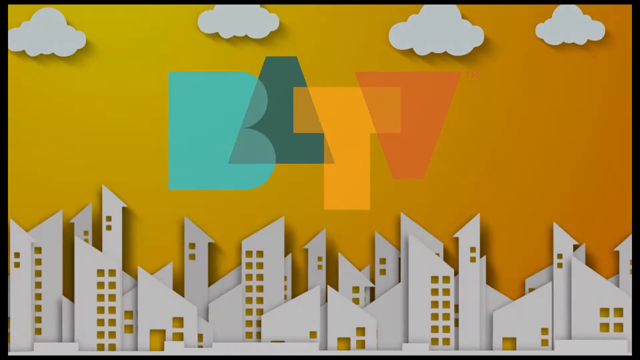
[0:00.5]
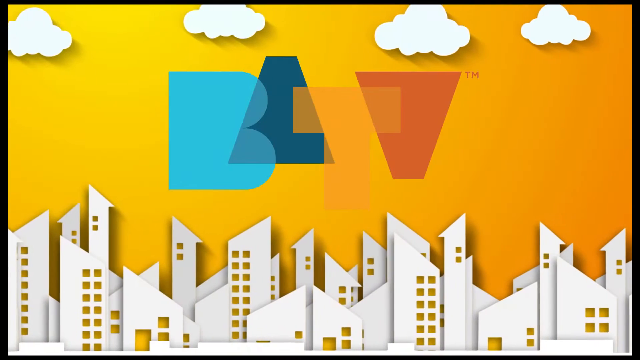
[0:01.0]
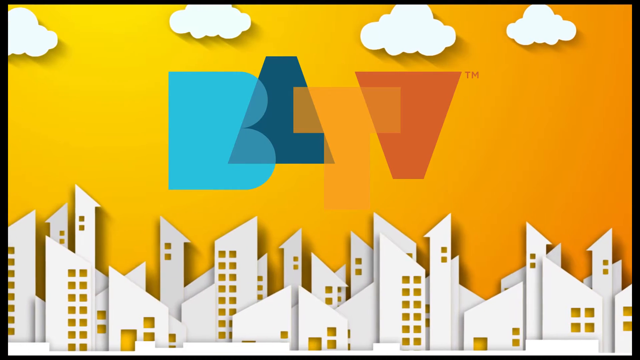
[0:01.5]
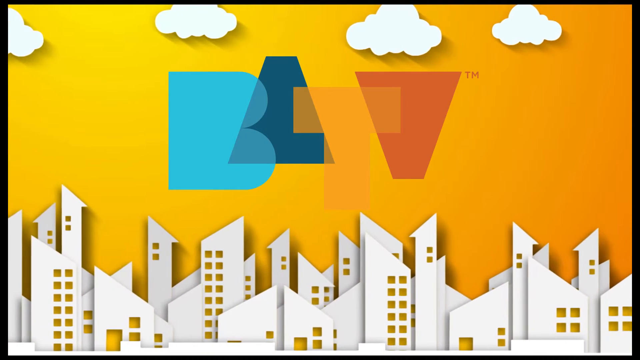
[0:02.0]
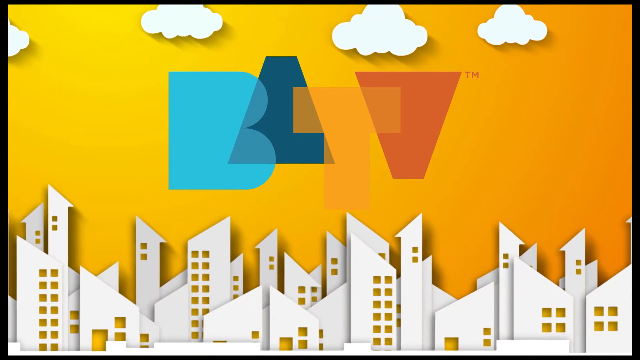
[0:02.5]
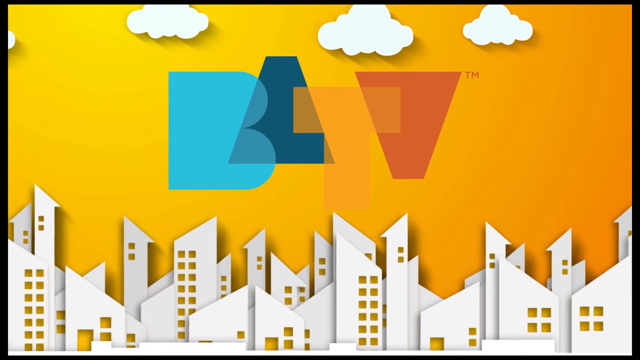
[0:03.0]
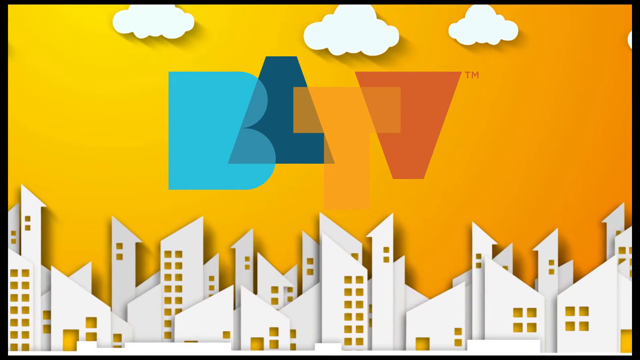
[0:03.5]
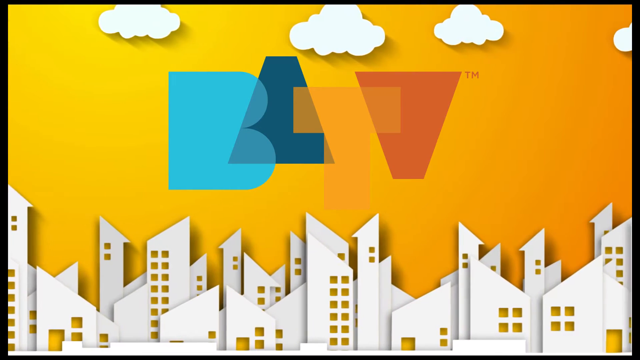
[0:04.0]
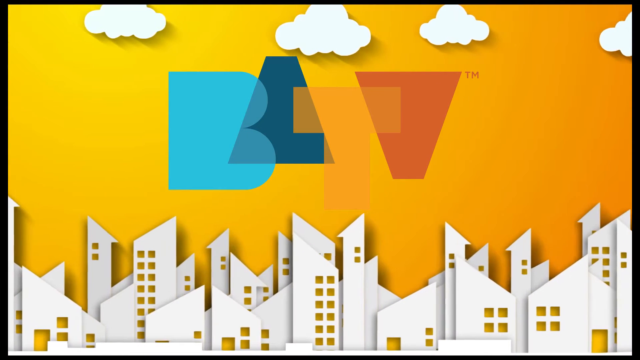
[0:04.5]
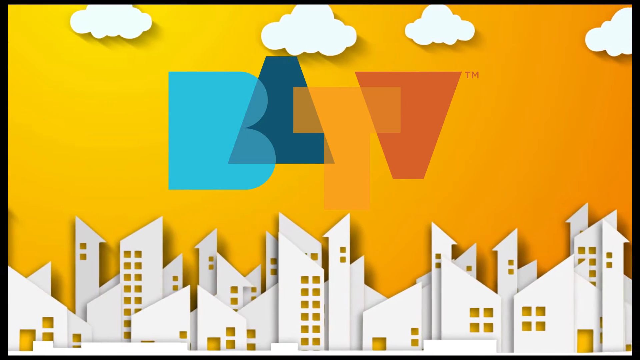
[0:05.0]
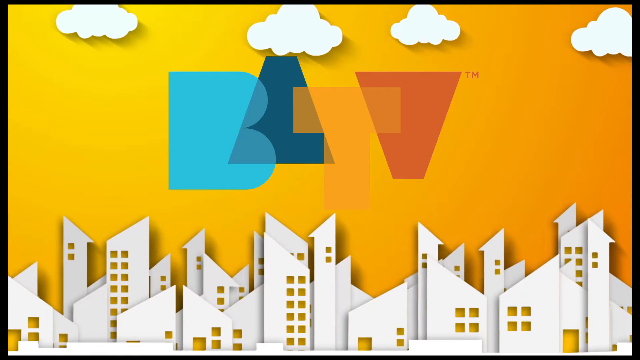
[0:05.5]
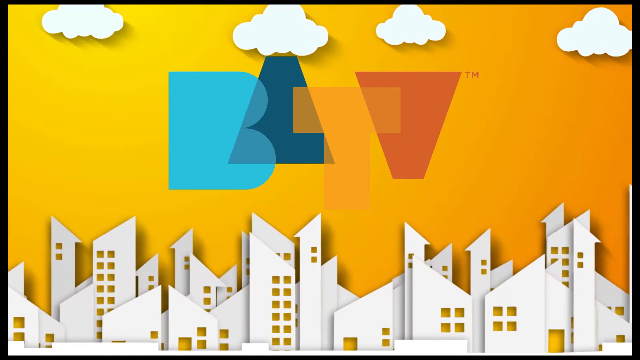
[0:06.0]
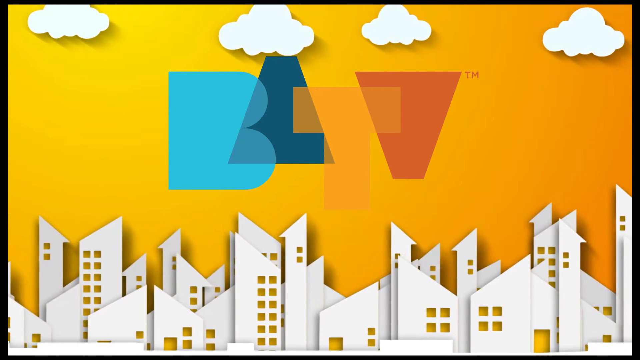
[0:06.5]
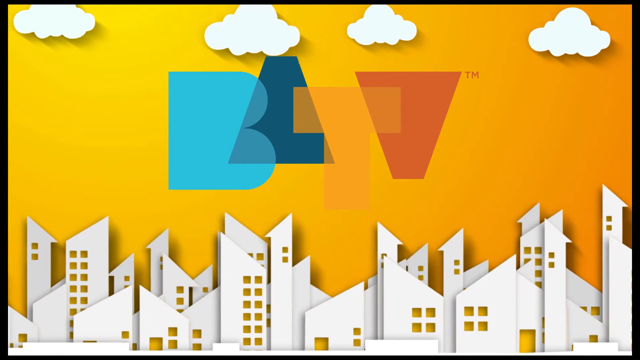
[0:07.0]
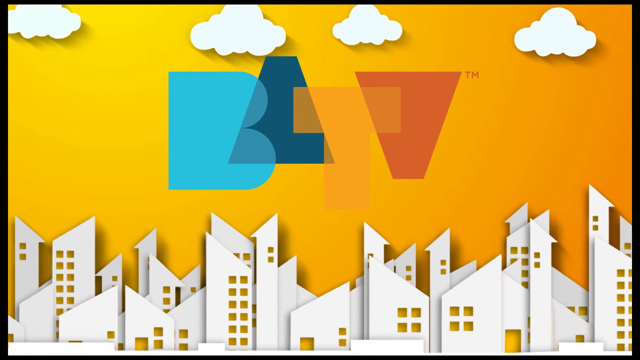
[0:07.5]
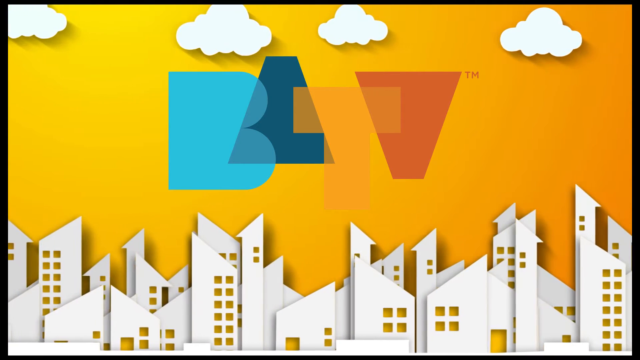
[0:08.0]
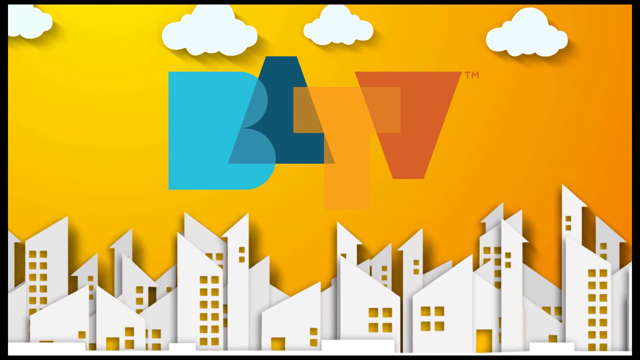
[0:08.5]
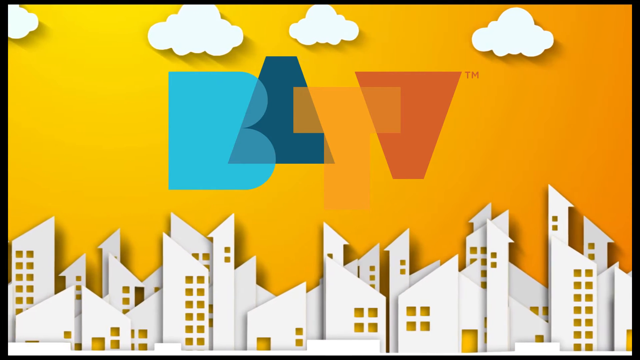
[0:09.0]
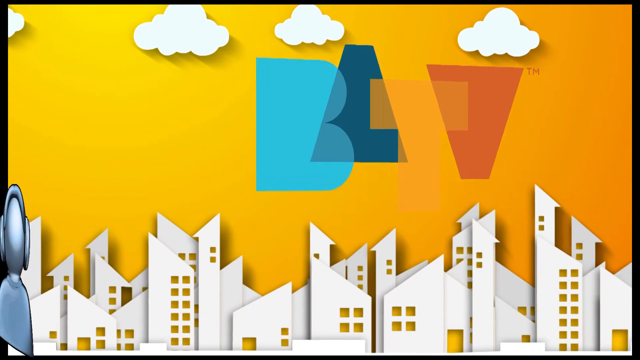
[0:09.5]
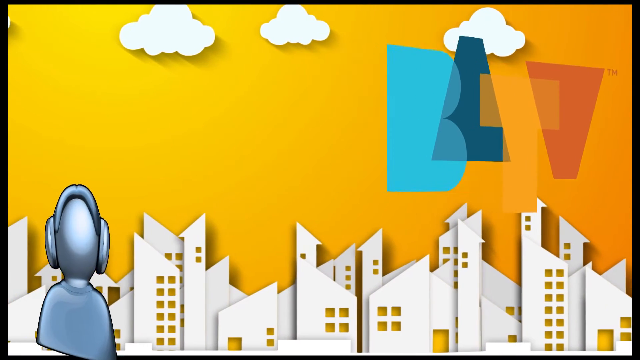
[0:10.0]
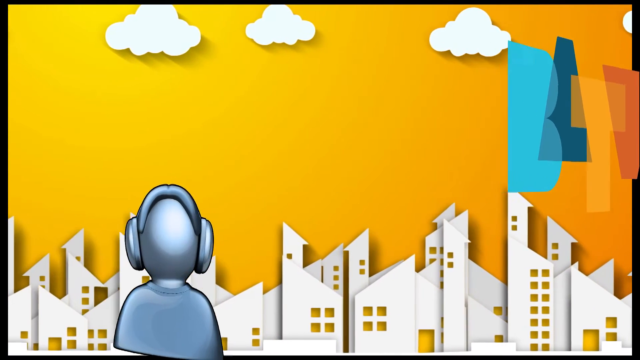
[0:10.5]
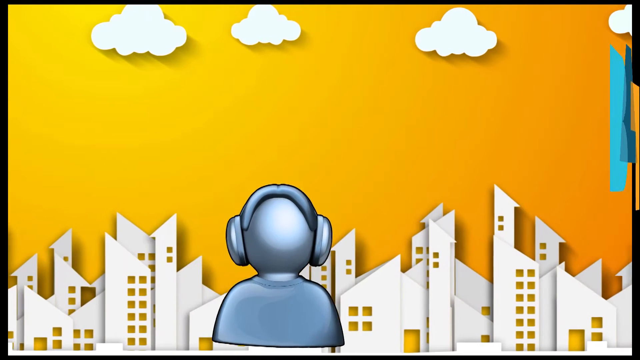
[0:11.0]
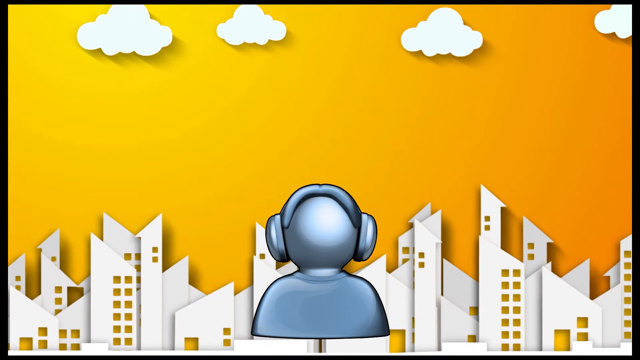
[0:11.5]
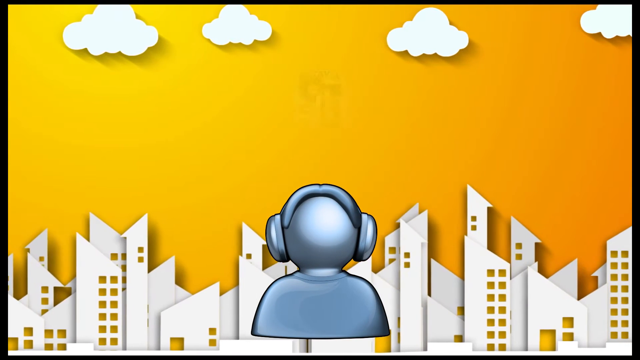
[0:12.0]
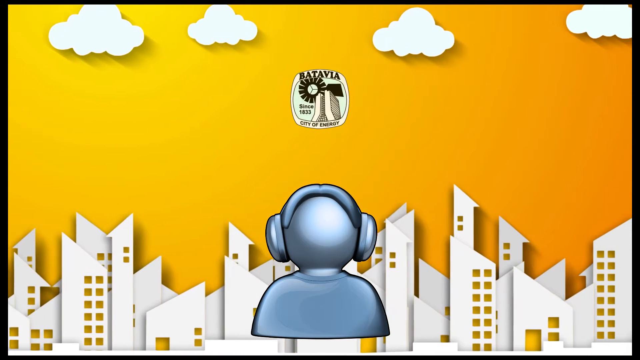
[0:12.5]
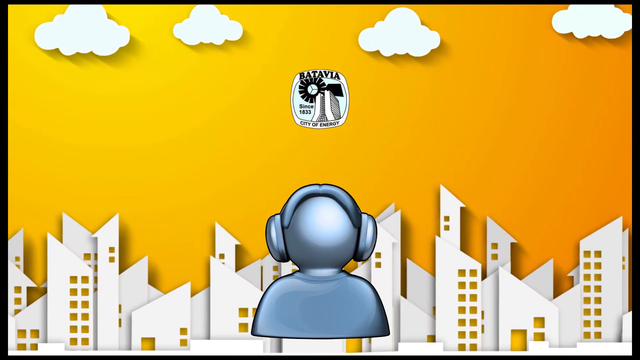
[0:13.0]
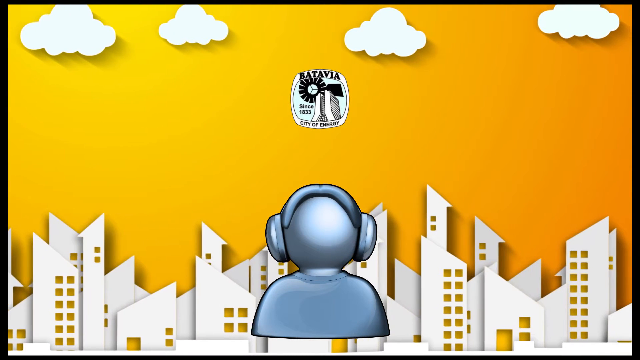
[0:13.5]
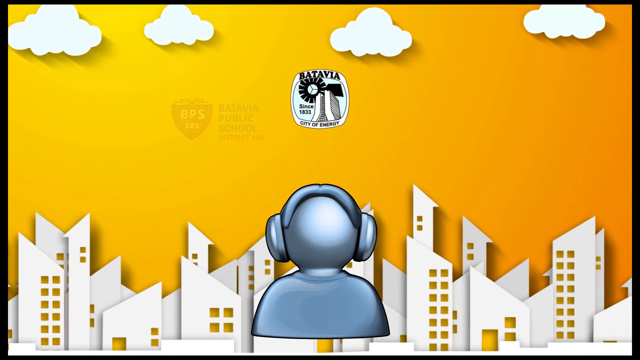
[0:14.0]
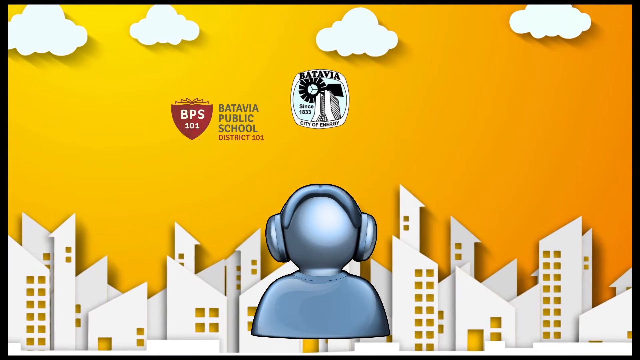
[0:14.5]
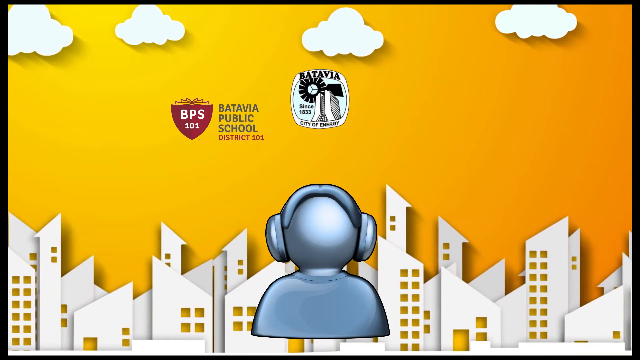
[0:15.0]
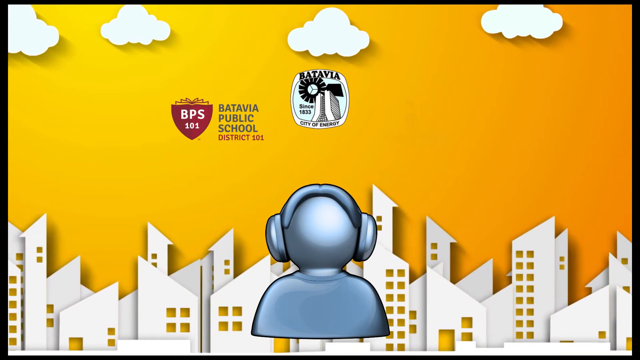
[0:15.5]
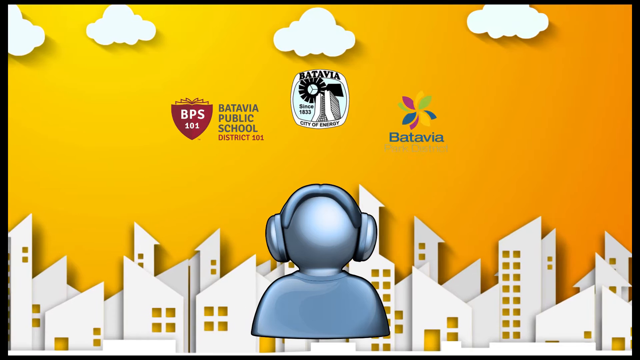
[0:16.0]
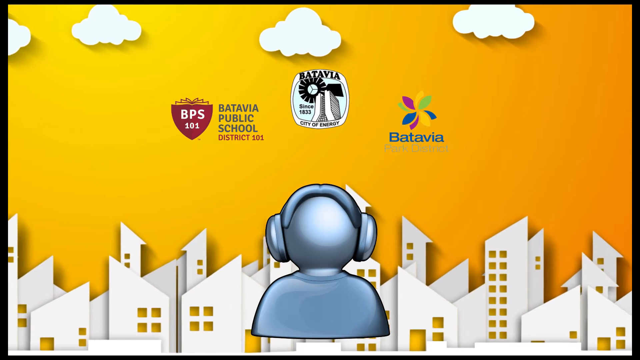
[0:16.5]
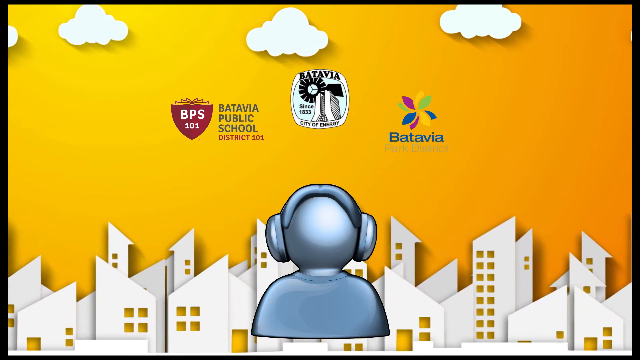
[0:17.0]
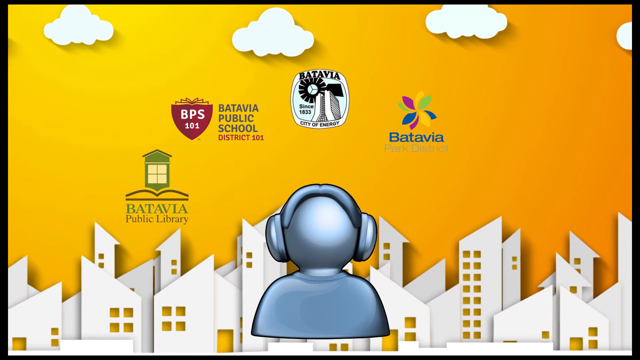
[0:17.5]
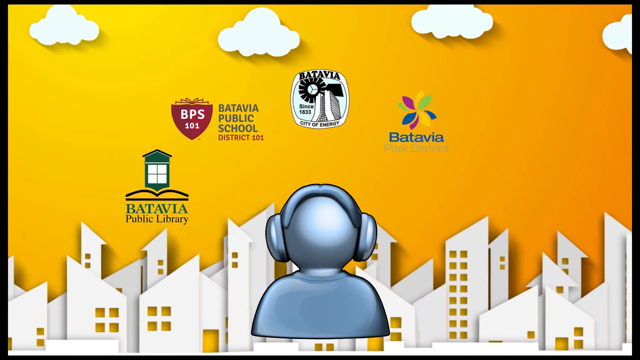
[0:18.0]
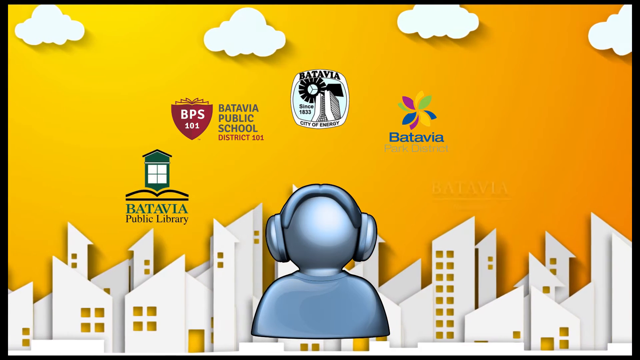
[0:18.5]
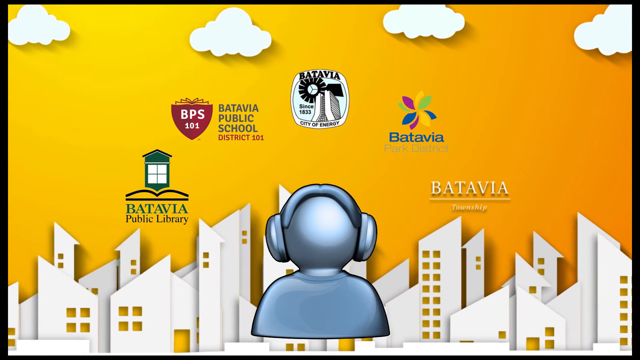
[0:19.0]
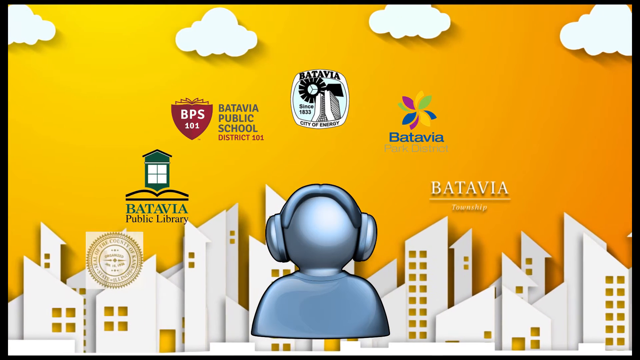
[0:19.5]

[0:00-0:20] A drawing of houses appears with the words "Batavia Public School" written on it; it is the school's logo. The buildings in the drawing seem to be schools and classrooms. There are shapes, including a triangle, a B and a T, along with a drawing of clouds and a drawing of the school. There is also an unclear figure, possibly a robot, that looks like it is wearing a headset. Another logo reads "BPS 101".